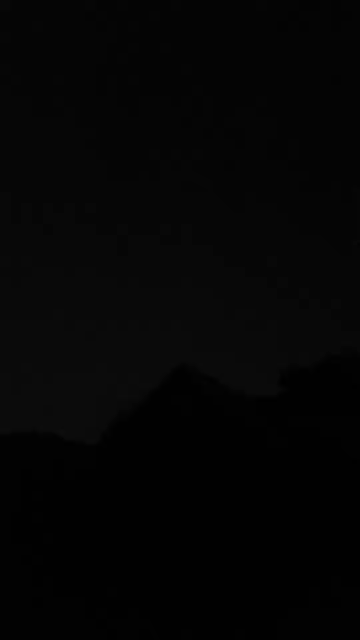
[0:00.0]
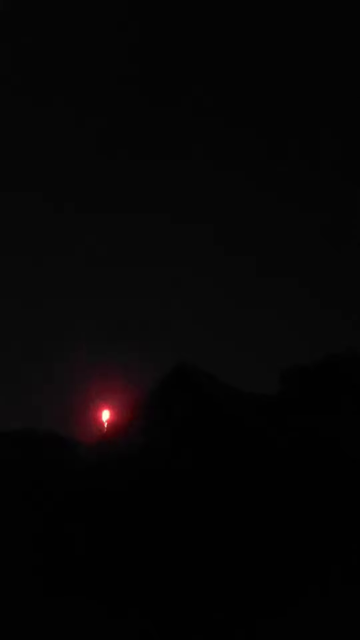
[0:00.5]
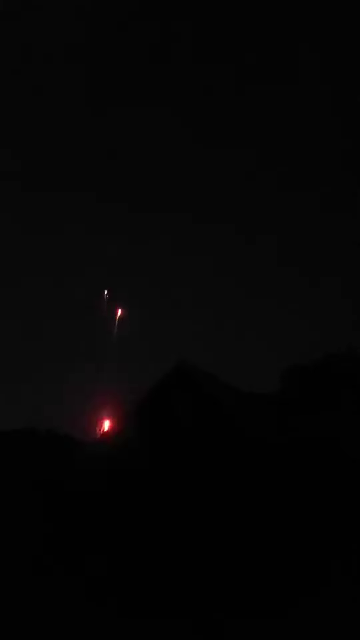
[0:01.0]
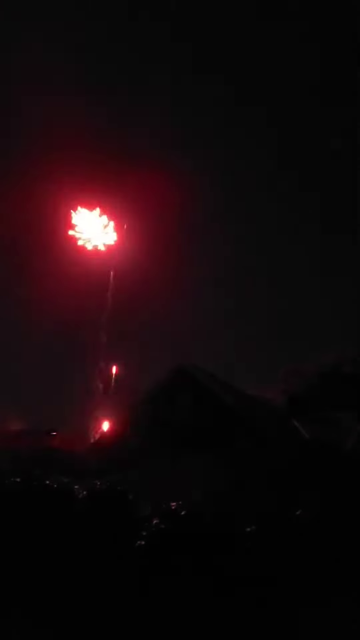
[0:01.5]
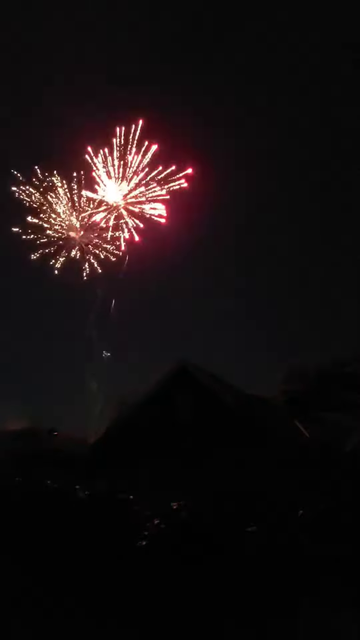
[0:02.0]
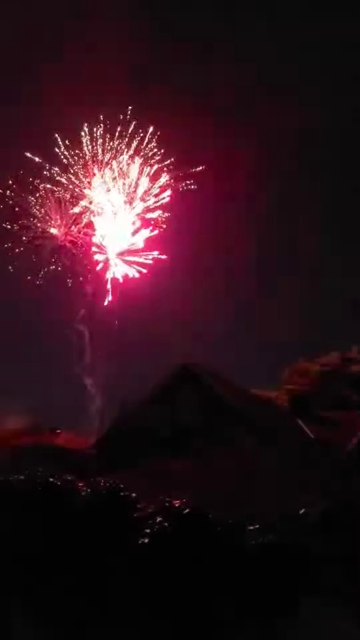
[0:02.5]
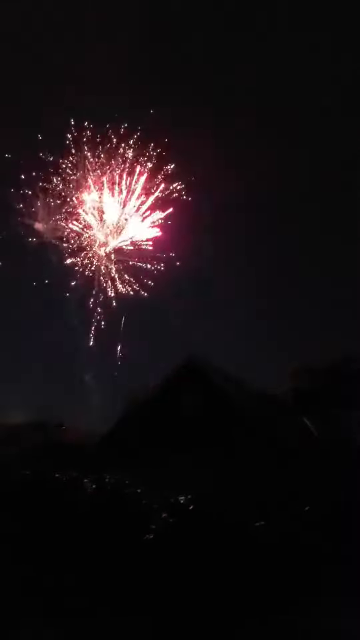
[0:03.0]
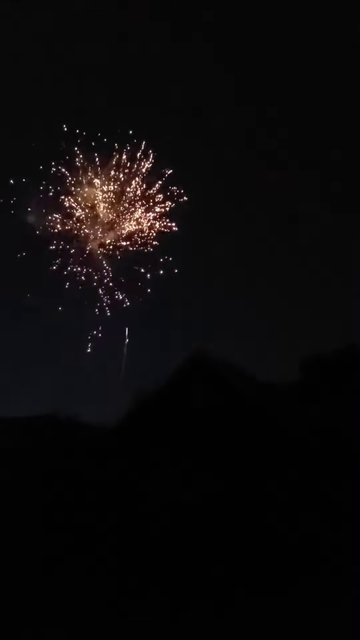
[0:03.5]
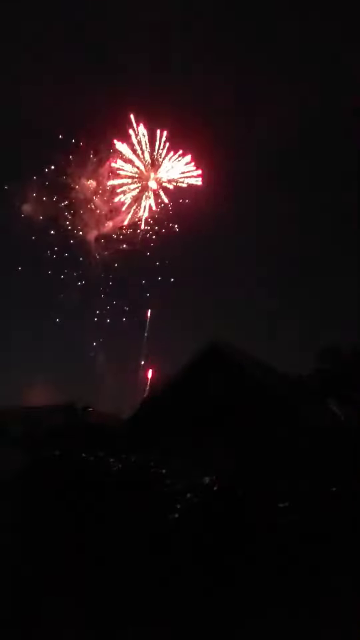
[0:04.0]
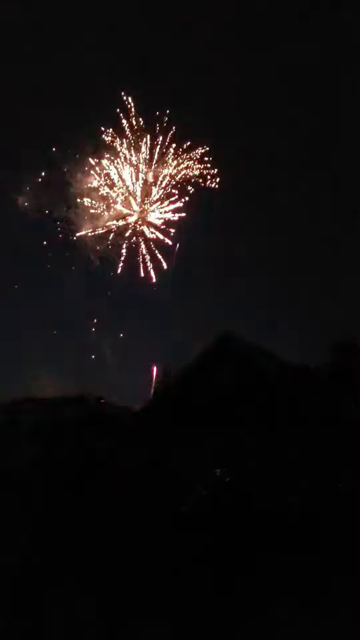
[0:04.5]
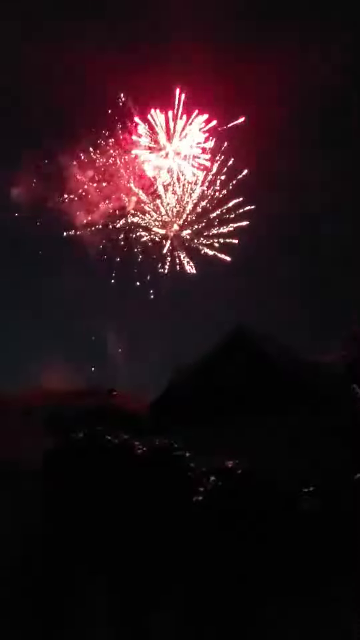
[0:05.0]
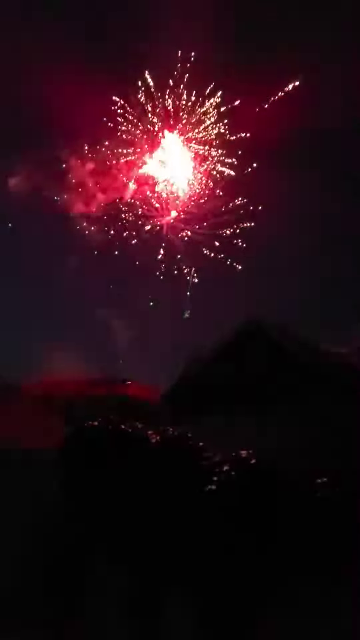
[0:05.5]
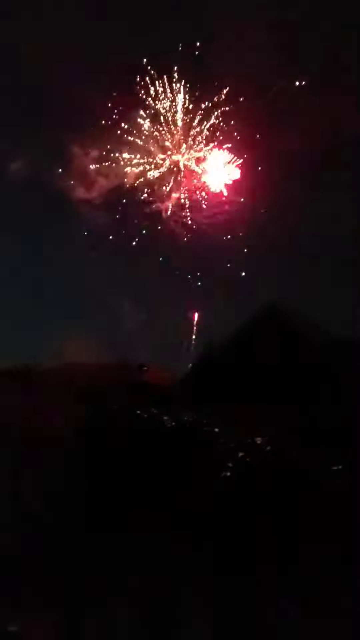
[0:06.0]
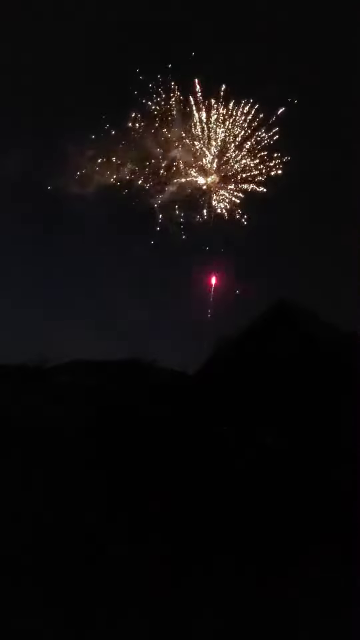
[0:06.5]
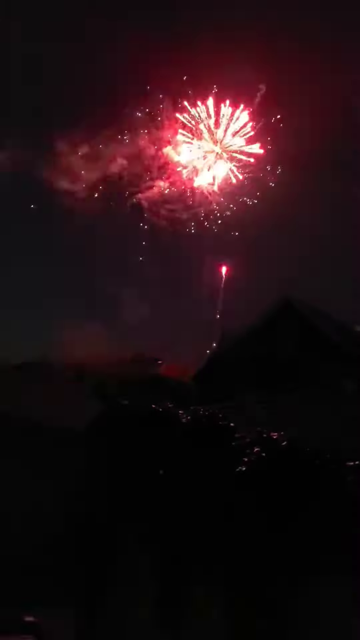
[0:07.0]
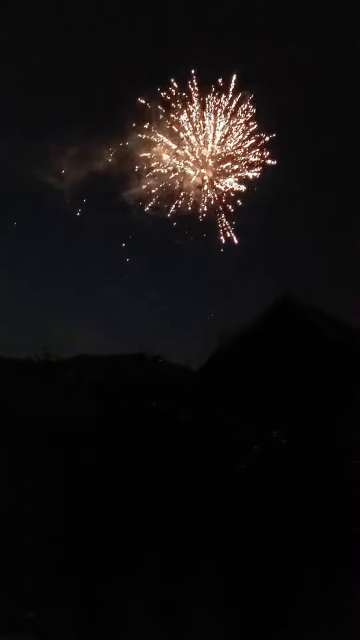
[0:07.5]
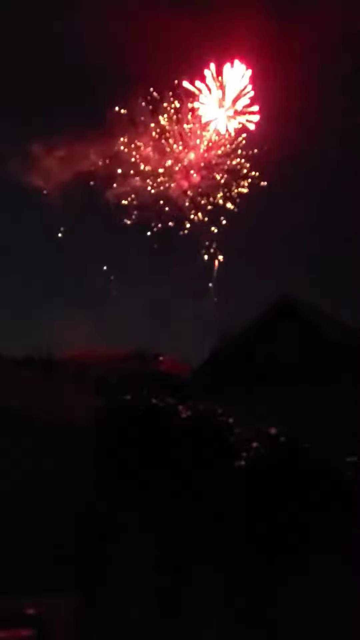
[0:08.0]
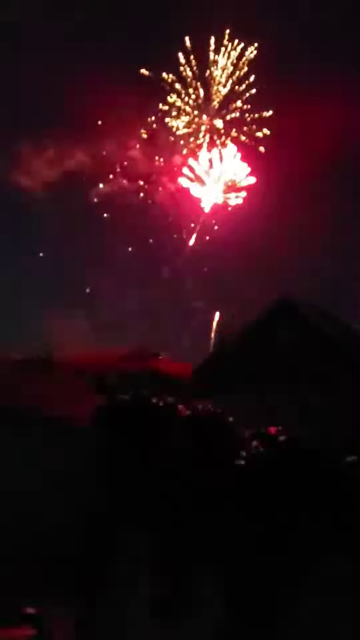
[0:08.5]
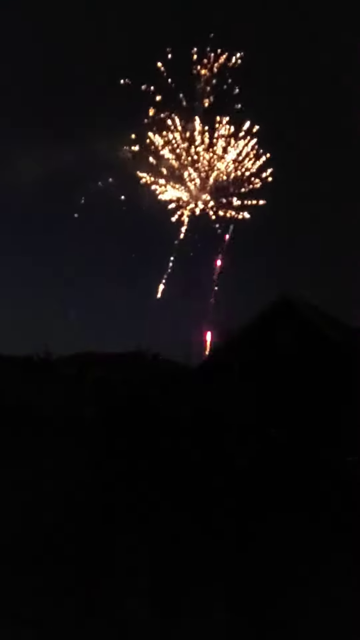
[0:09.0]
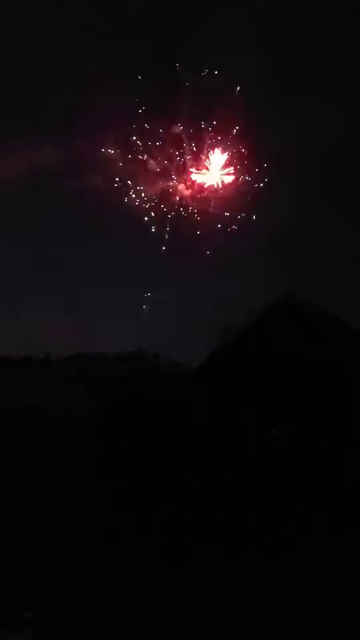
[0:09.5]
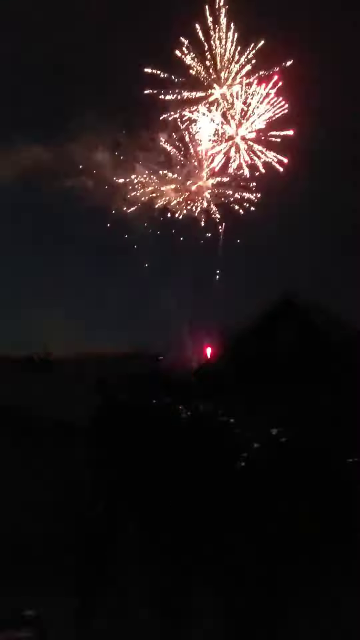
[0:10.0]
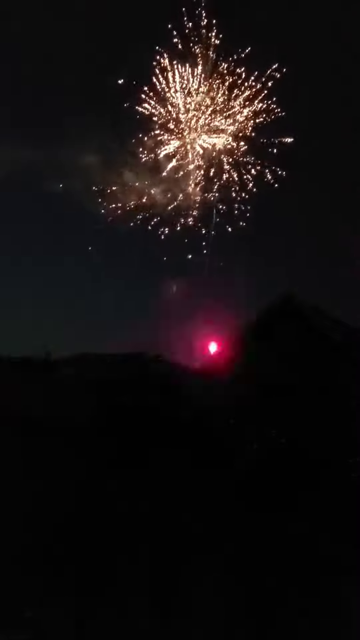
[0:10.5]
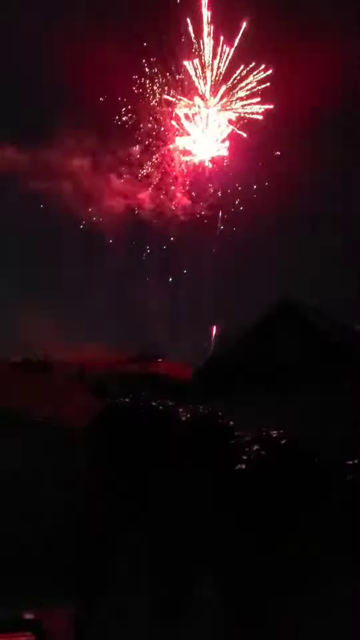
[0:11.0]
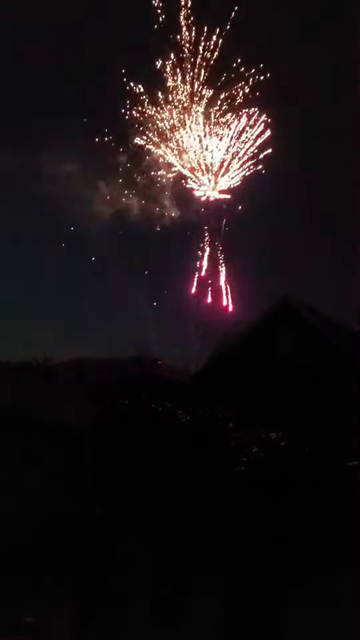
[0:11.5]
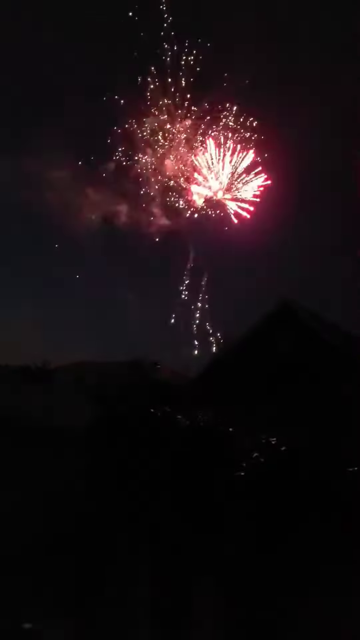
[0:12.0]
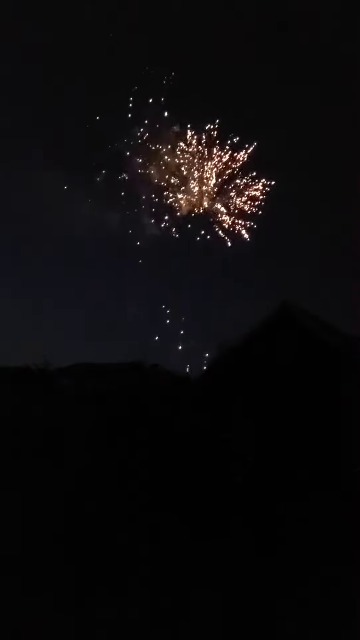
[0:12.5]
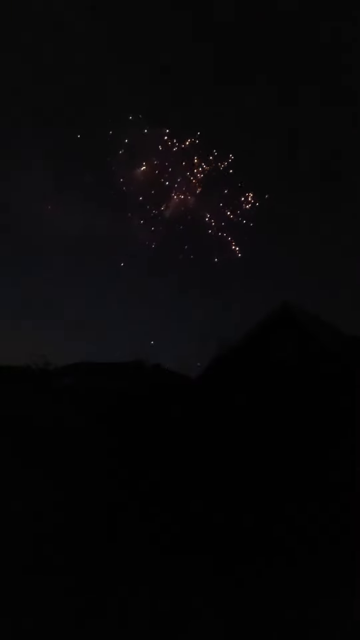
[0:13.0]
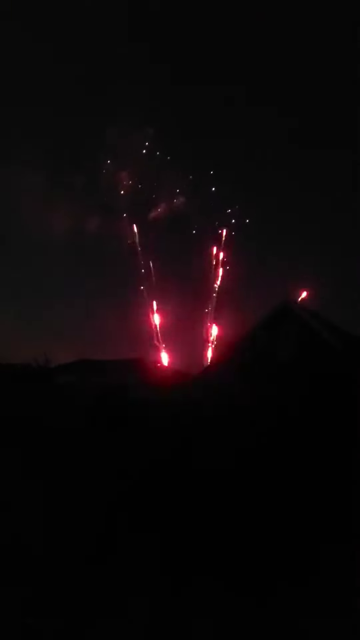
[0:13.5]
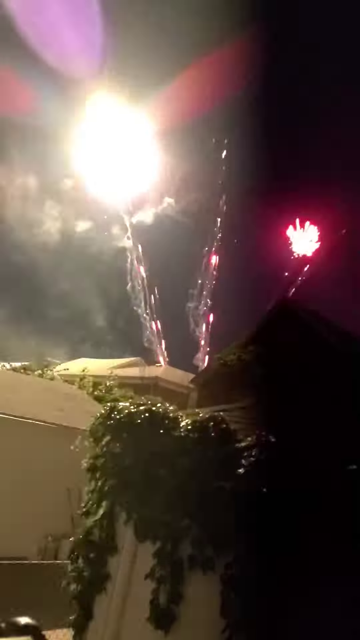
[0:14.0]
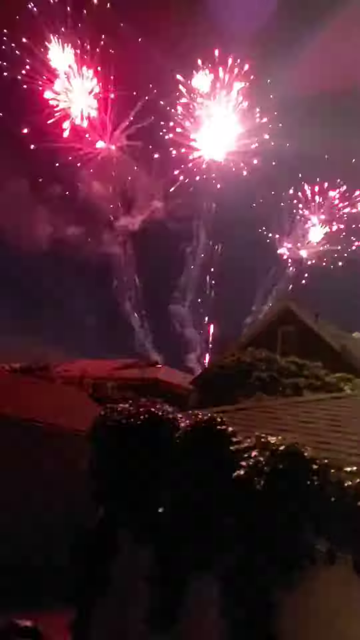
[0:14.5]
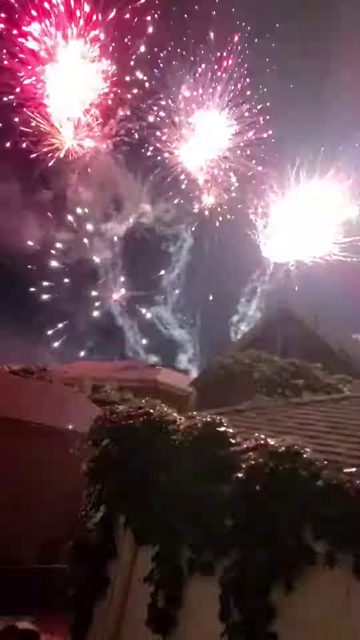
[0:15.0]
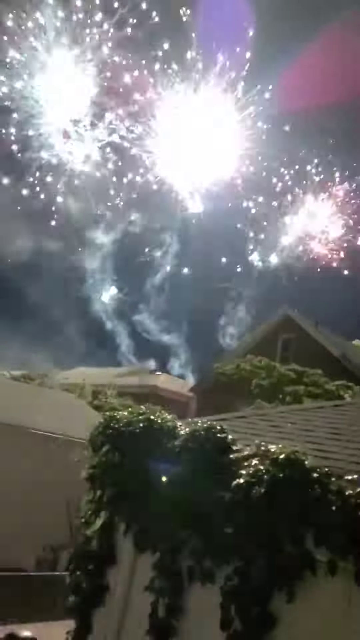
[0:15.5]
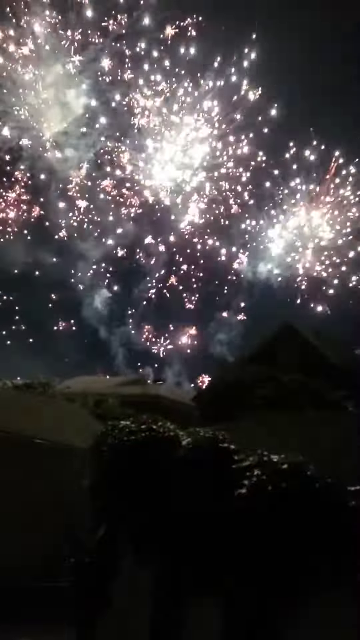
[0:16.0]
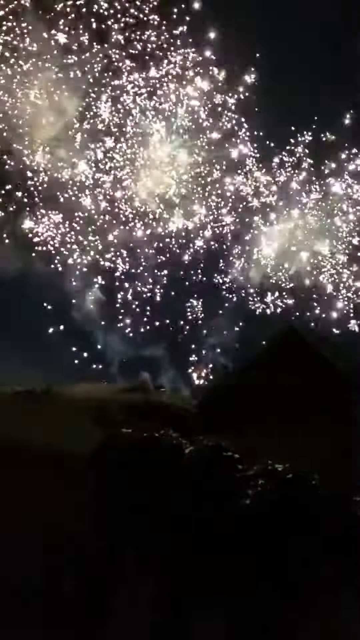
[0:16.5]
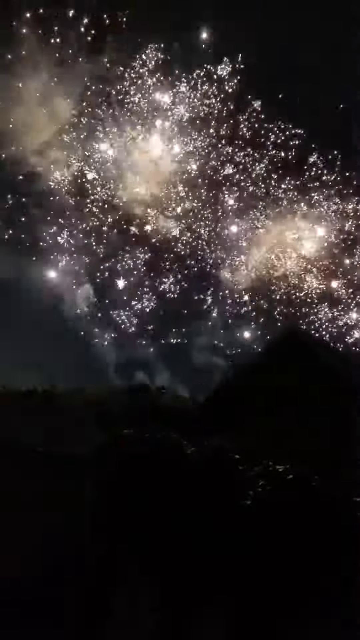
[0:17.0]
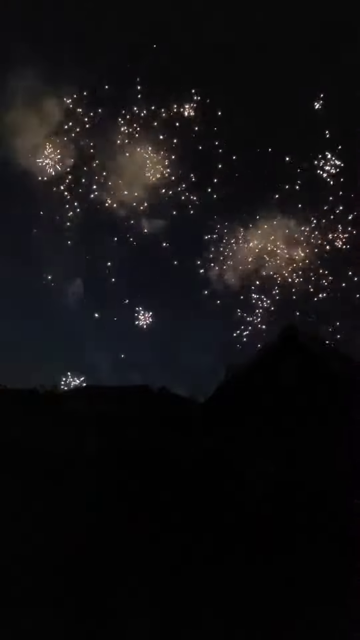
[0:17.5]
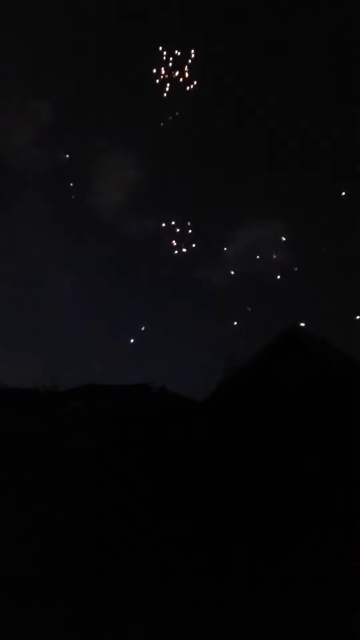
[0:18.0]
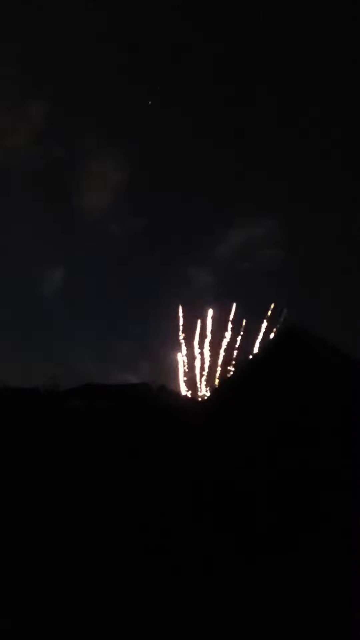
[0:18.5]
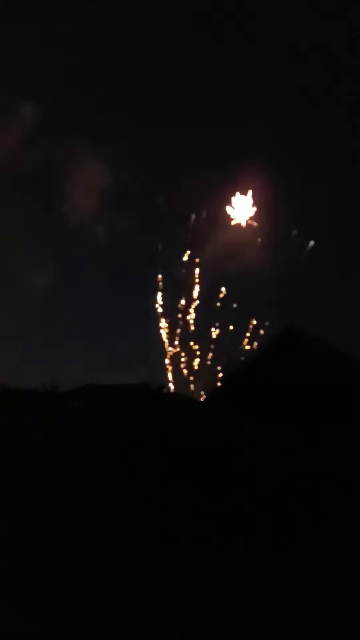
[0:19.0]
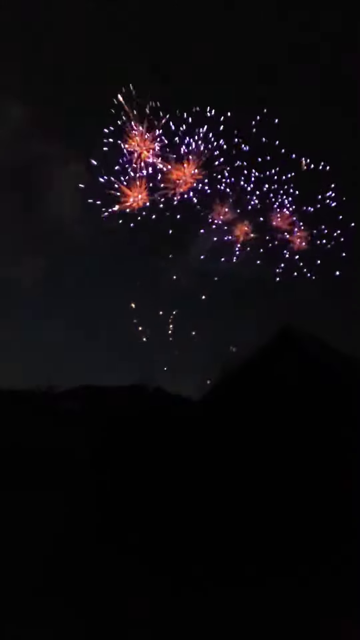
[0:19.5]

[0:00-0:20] Various fireworks shoot off into the sky. They appear to be professional fireworks rather than the kind typically bought at a stand: rockets and similar fireworks that explode in the sky. When the fireworks flash, details of the environment become visible. The setting seems to be some sort of farm, with rolling hills in the background and neatly arranged rows of crops in the foreground, suggesting a farming community. The most common firework is some sort of bottle rocket that shoots up into the air pink and then turns white.